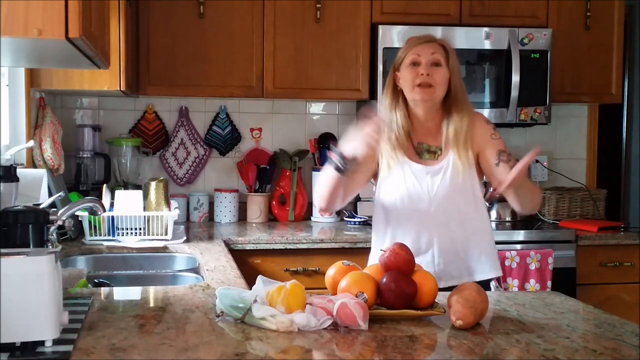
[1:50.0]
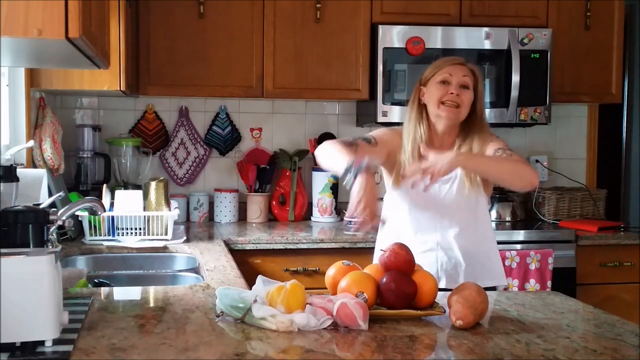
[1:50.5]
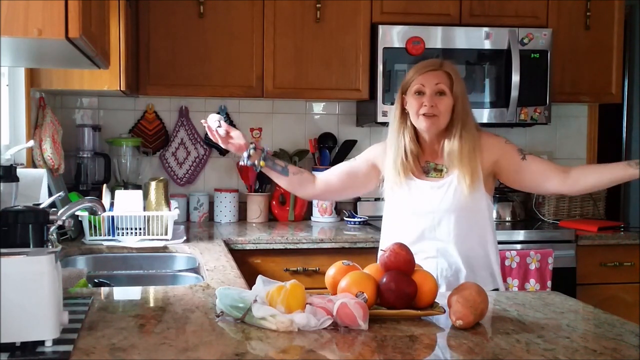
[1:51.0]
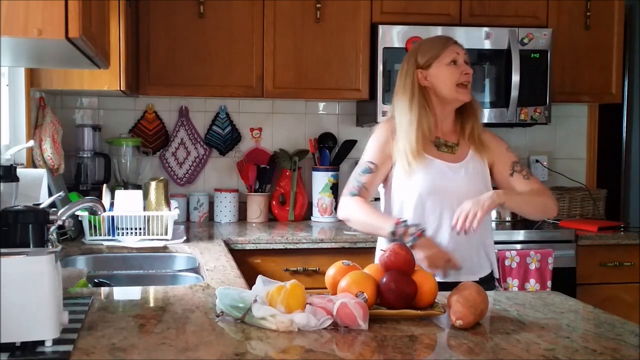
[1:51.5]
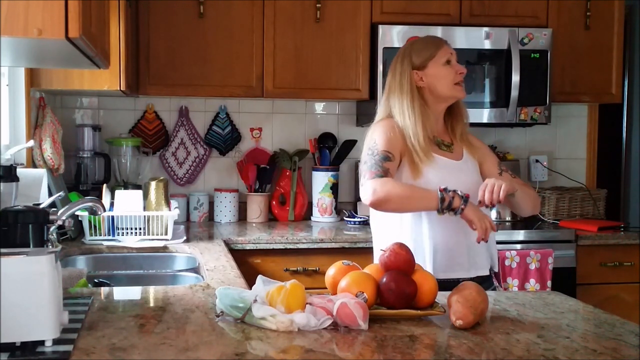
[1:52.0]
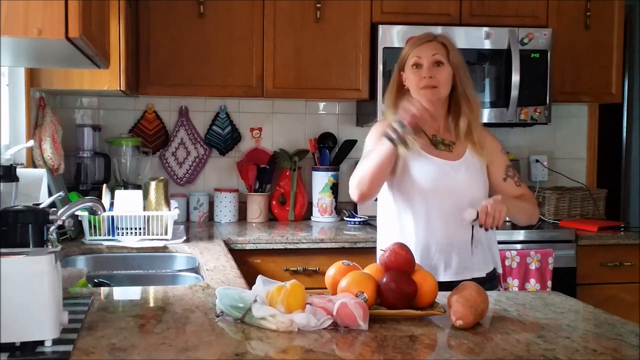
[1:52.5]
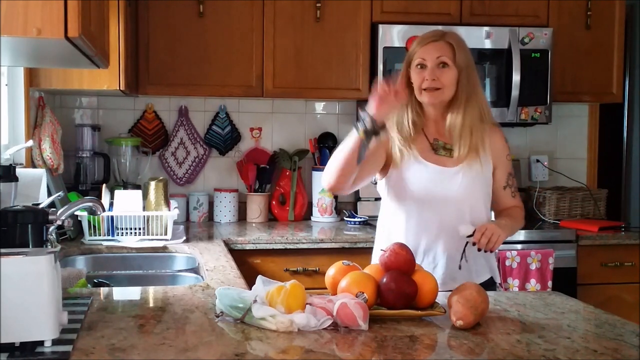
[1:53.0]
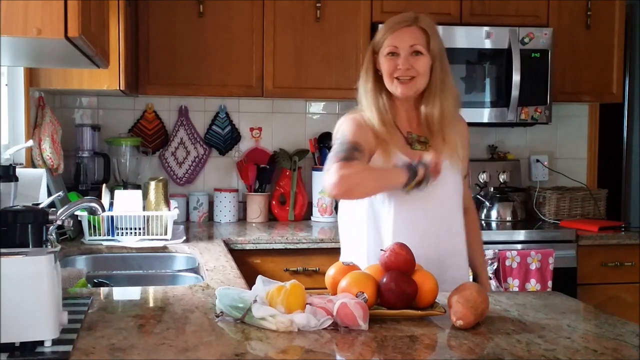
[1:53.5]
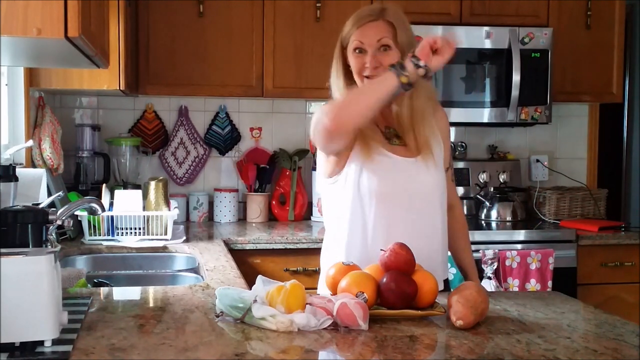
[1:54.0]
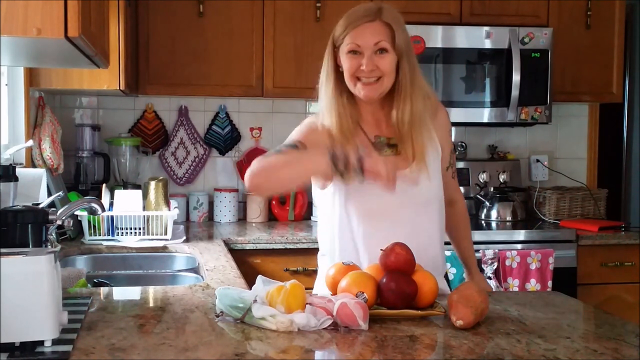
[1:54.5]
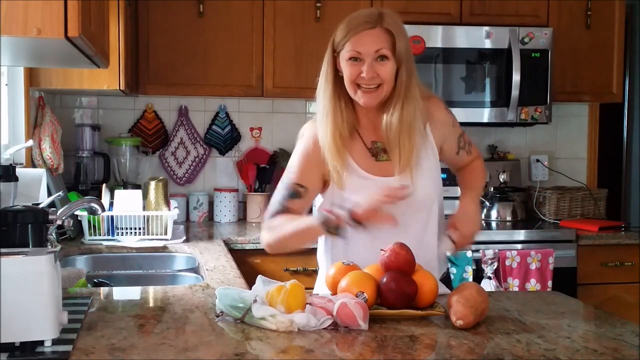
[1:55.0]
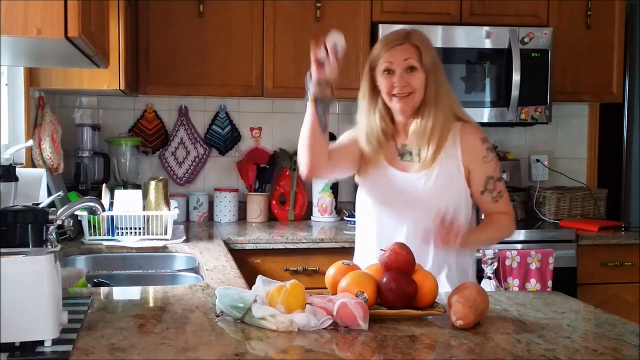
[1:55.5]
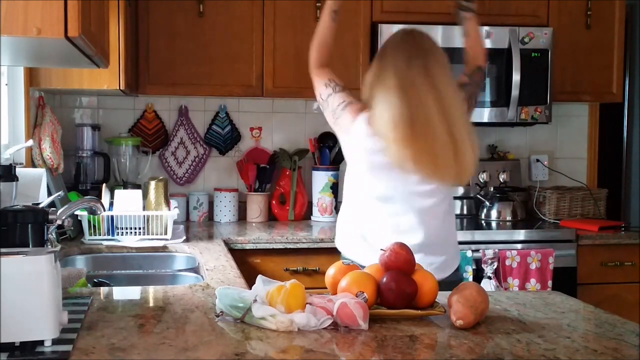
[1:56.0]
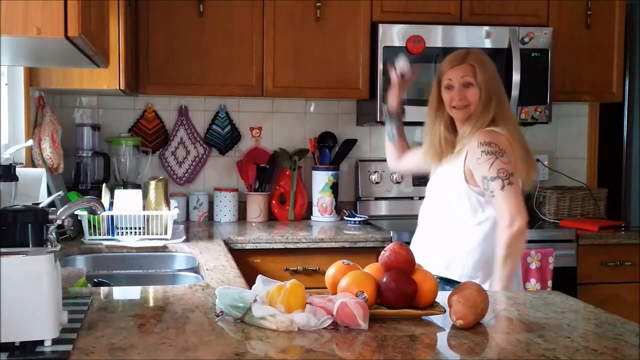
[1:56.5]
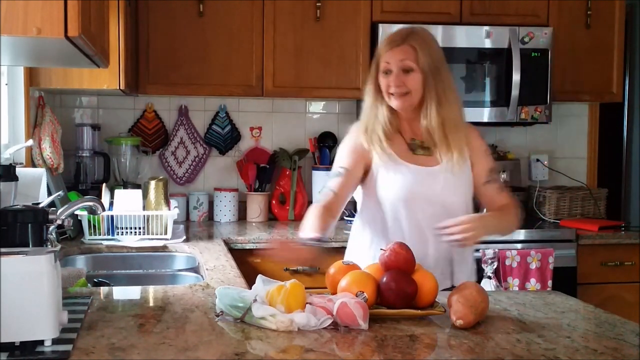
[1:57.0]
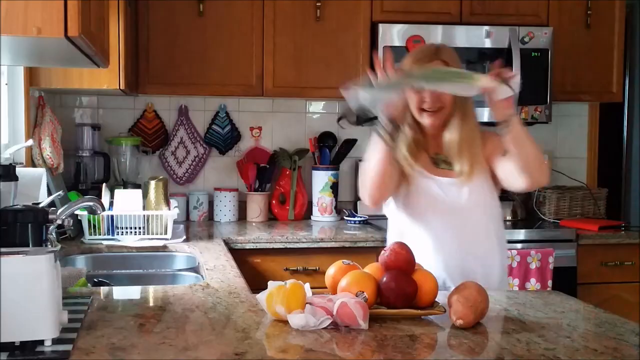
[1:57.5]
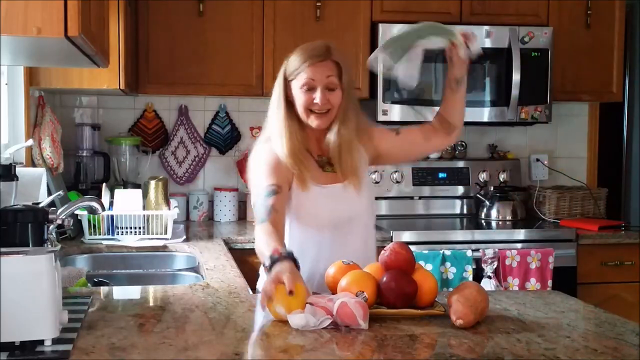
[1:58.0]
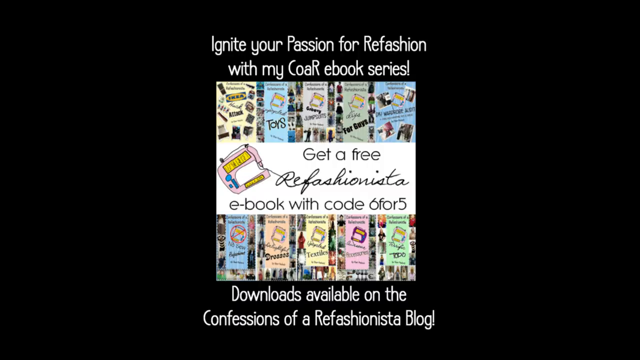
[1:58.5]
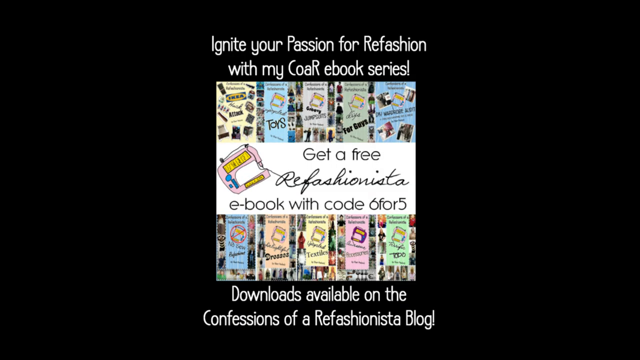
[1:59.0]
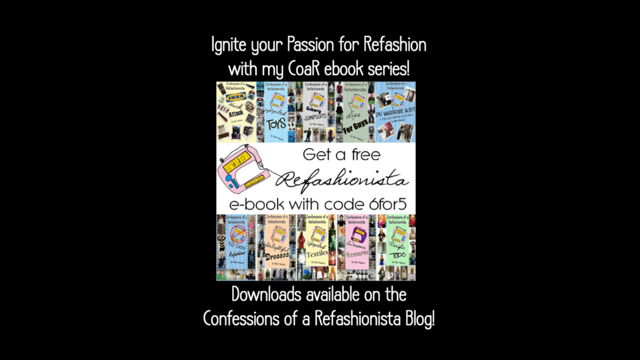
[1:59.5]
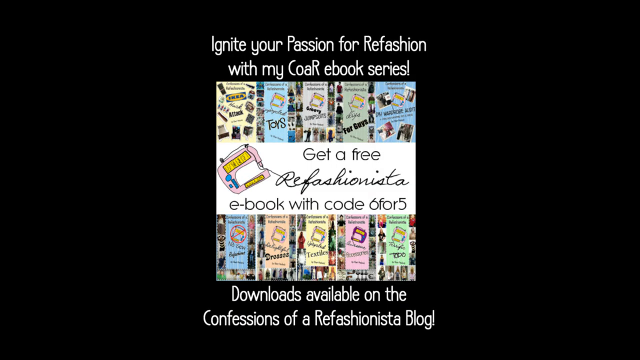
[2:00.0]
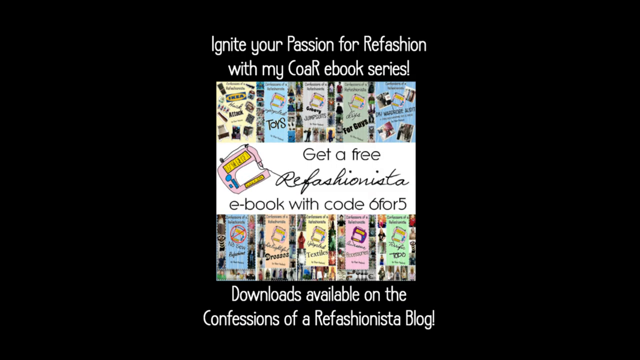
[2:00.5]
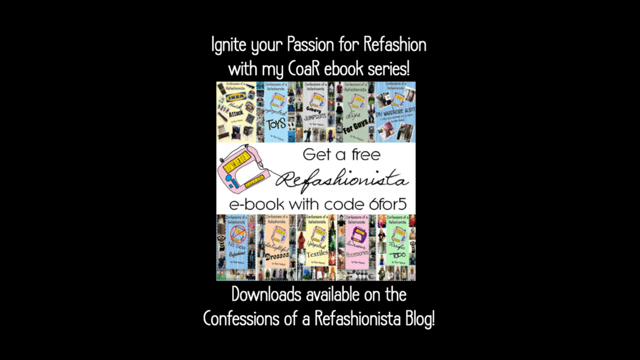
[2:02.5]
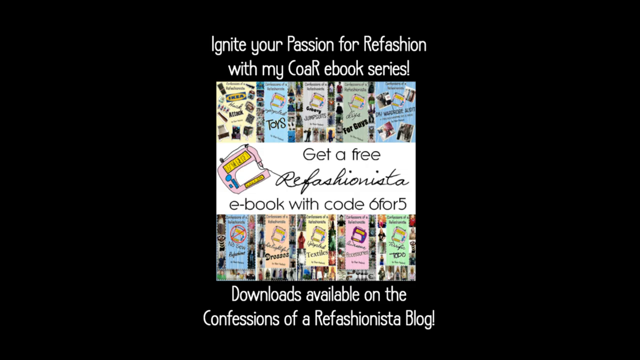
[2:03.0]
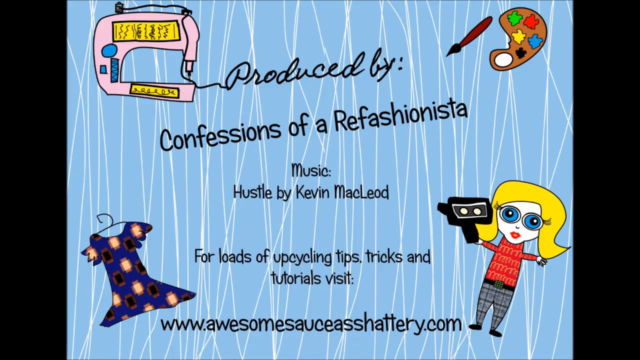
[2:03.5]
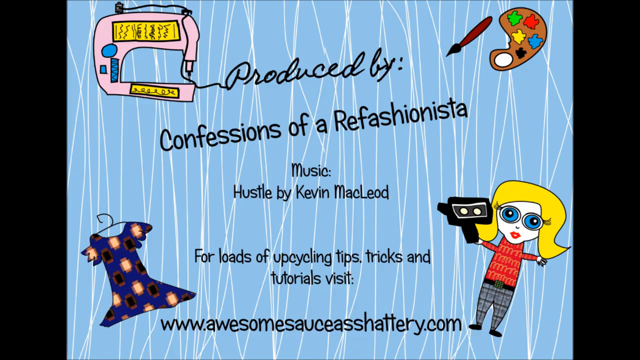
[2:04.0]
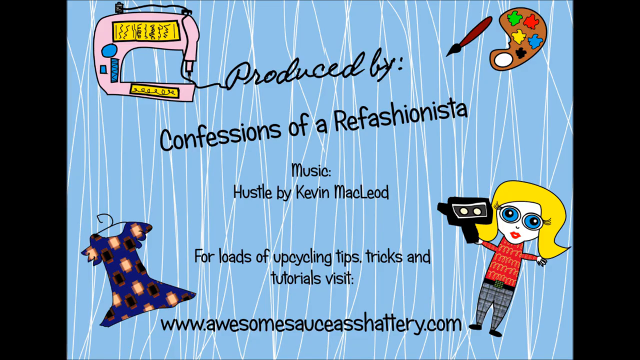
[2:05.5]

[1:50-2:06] She showcases the fruit and vegetables, including the potatoes she got from the grocery market, and shows her reusable bags. She seems very excited. For a couple of seconds she does a little dance, showing off the reusable bags. At the end she says "Get a free ebook with the code 645", downloadable on the "Confessions of a Refashionable" blog, followed by "Music Hustle by Kevin".